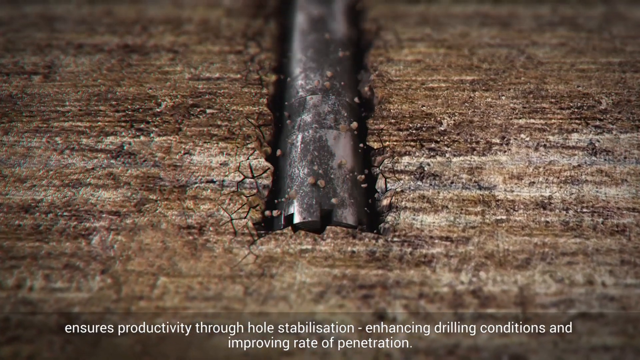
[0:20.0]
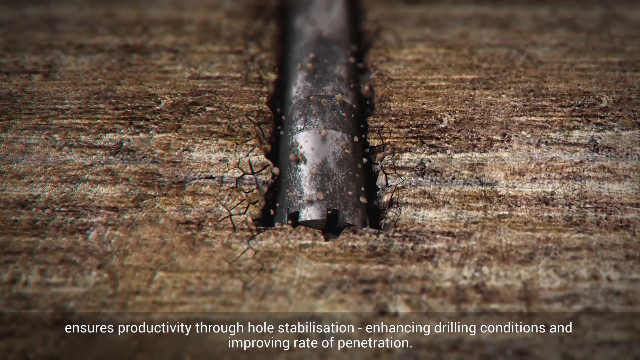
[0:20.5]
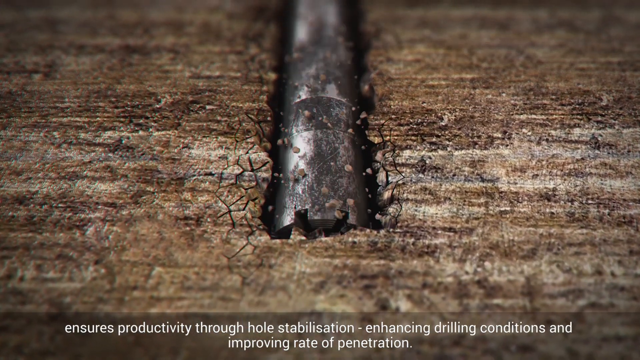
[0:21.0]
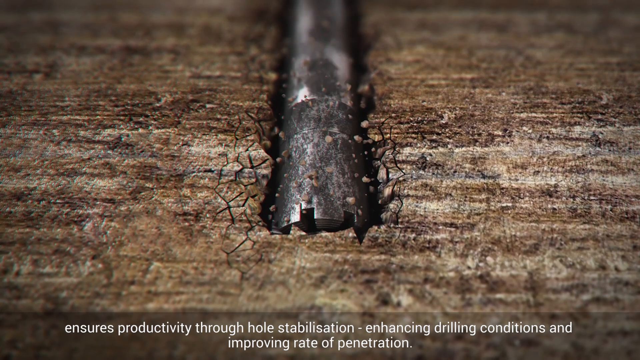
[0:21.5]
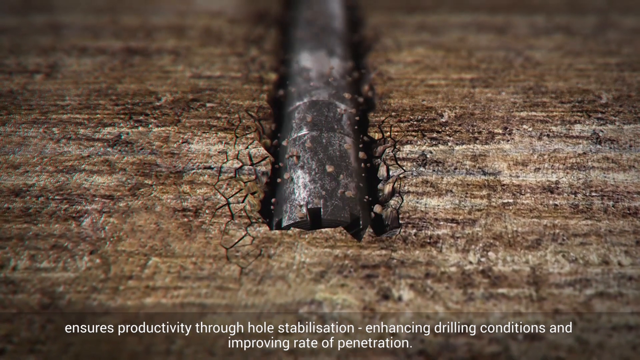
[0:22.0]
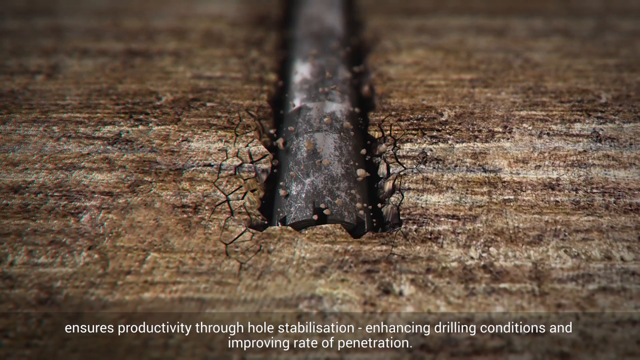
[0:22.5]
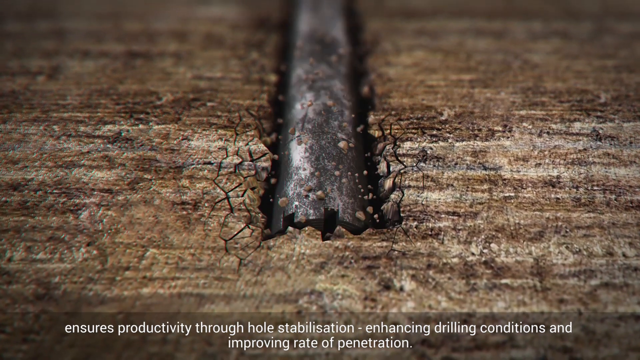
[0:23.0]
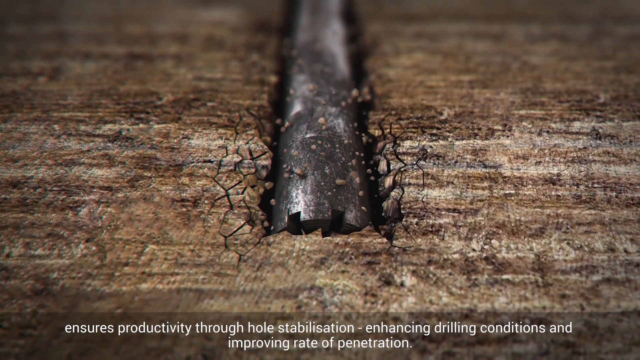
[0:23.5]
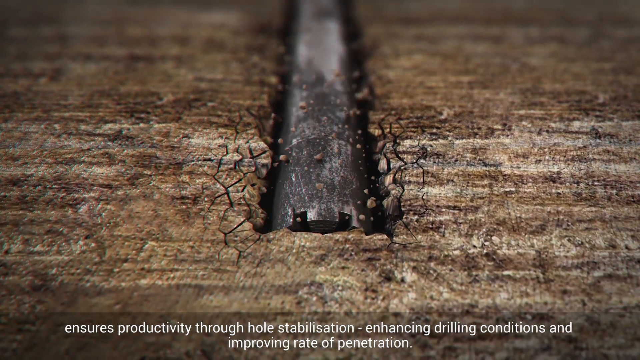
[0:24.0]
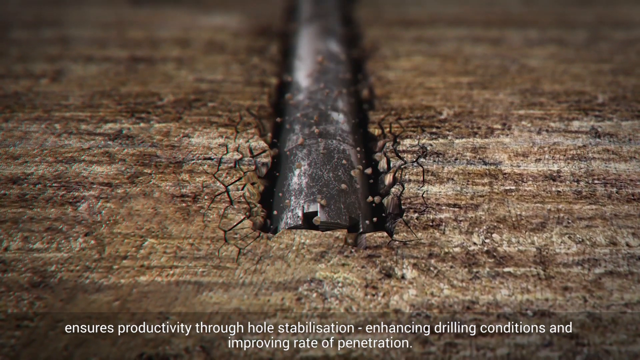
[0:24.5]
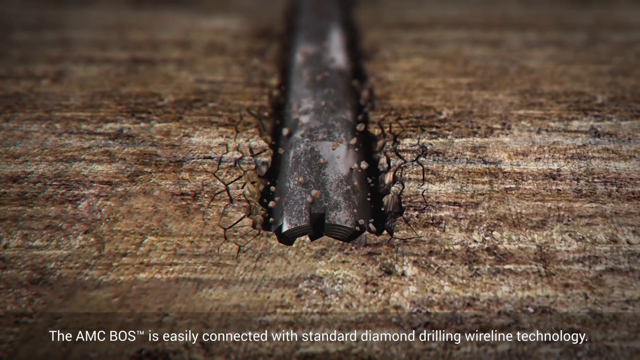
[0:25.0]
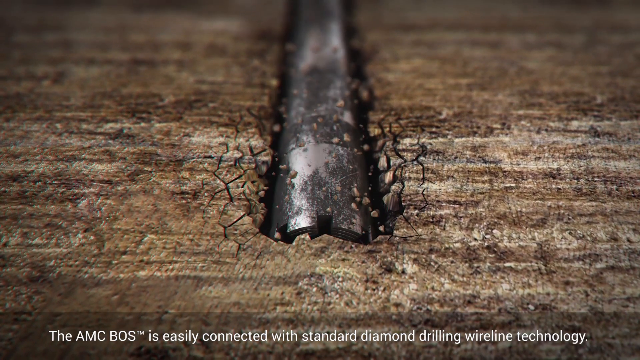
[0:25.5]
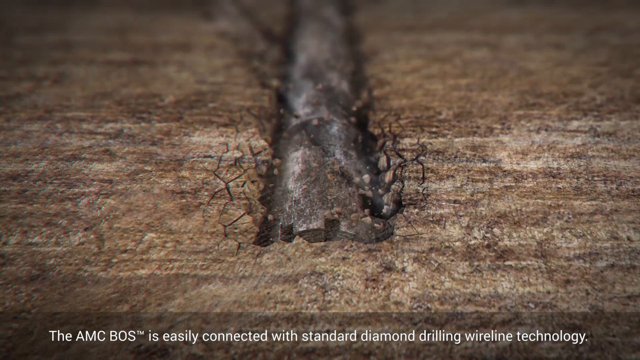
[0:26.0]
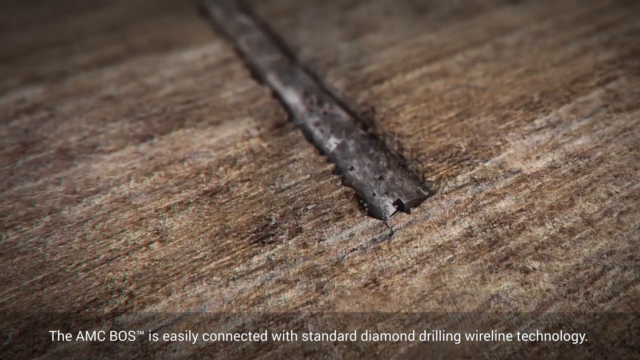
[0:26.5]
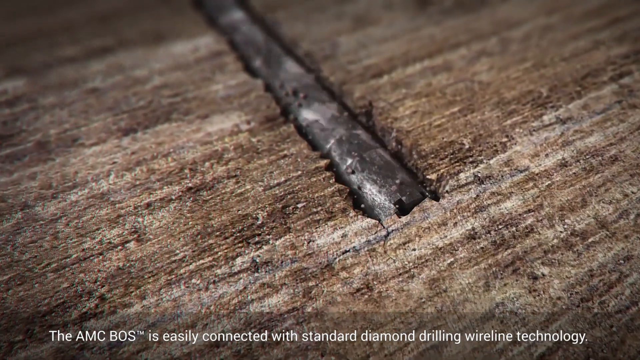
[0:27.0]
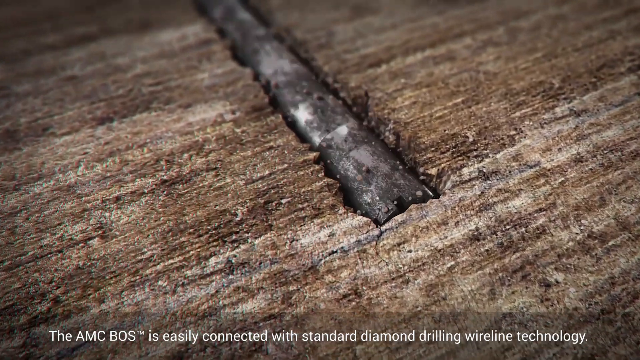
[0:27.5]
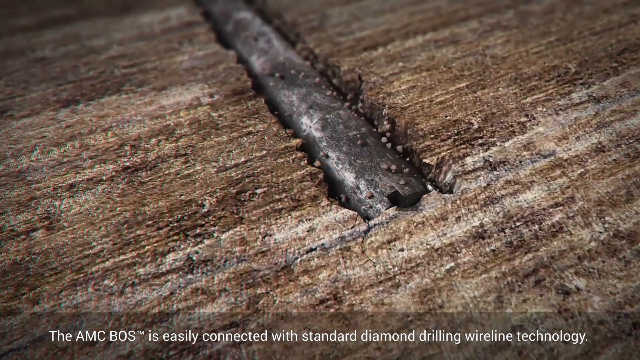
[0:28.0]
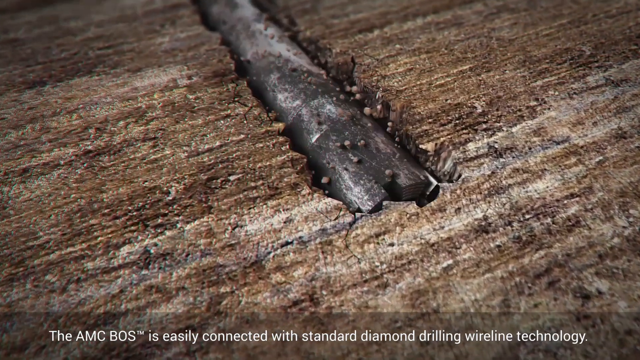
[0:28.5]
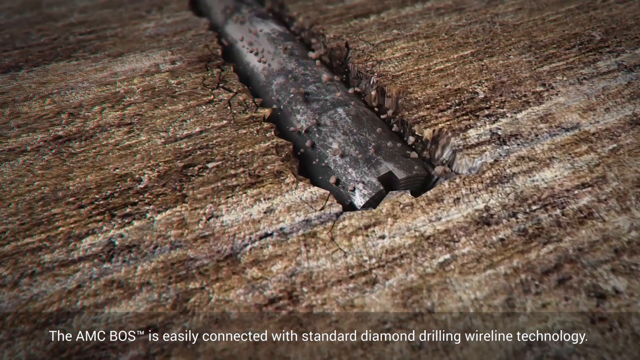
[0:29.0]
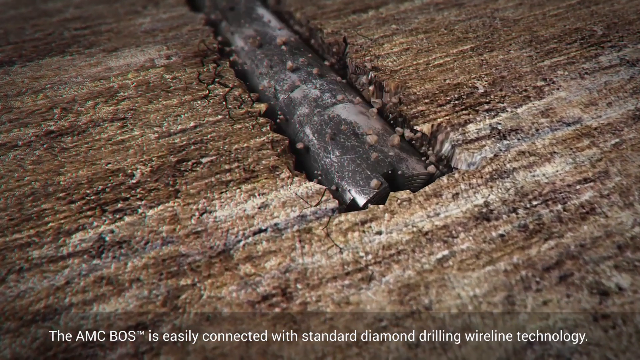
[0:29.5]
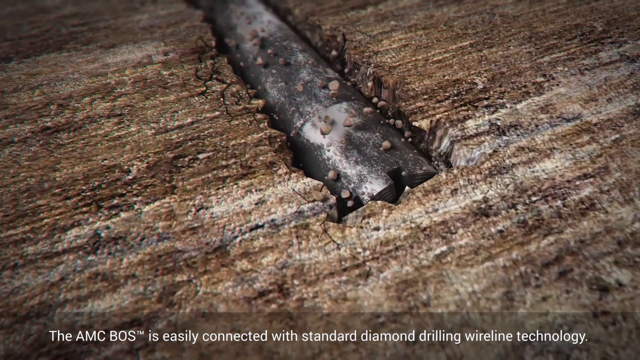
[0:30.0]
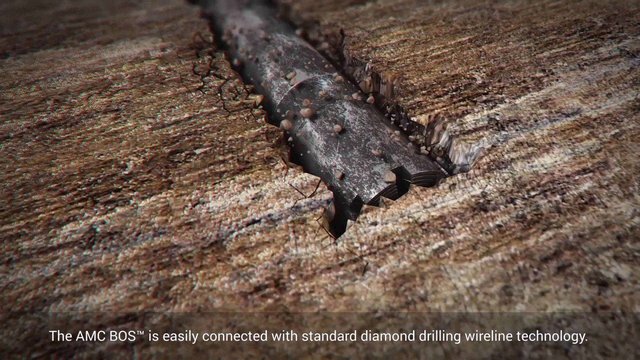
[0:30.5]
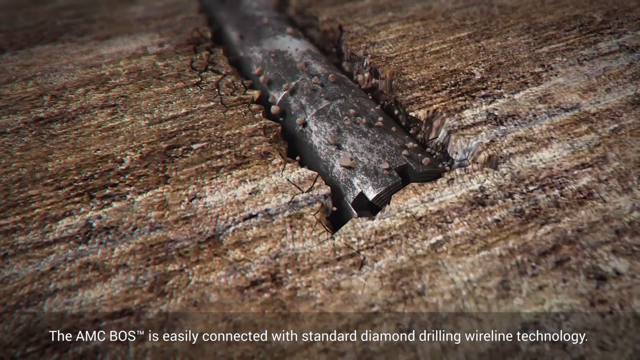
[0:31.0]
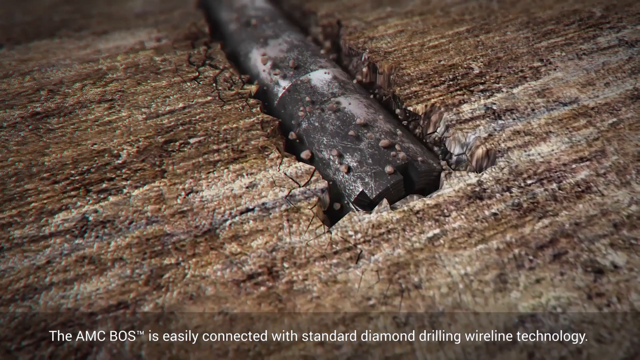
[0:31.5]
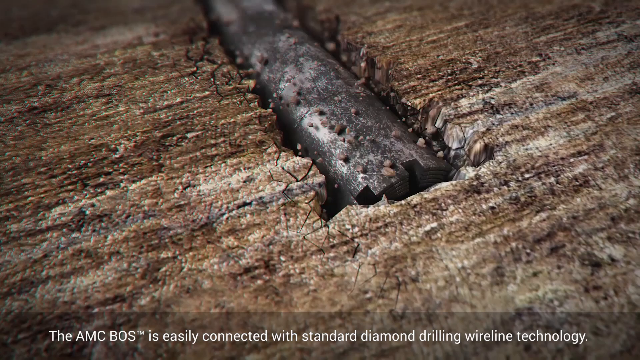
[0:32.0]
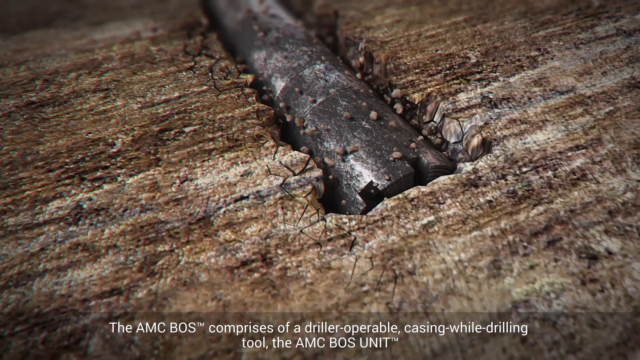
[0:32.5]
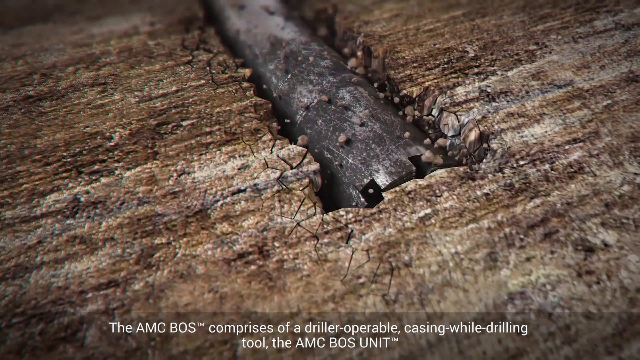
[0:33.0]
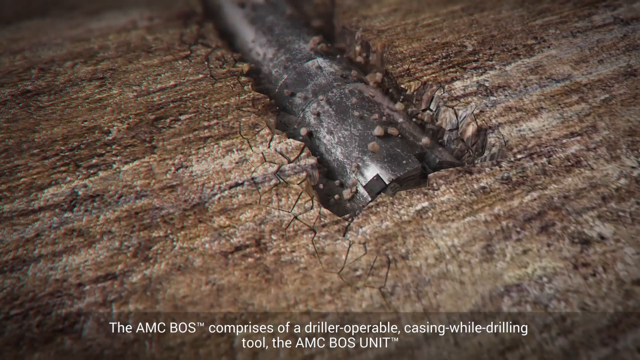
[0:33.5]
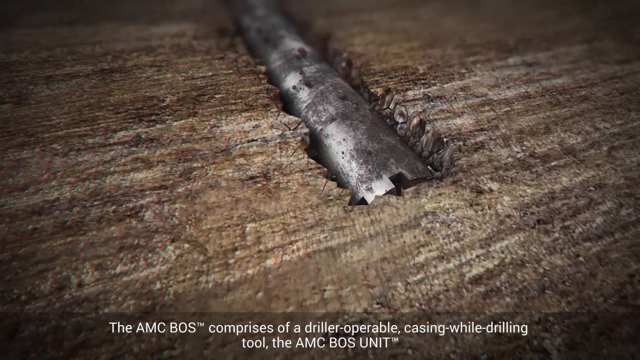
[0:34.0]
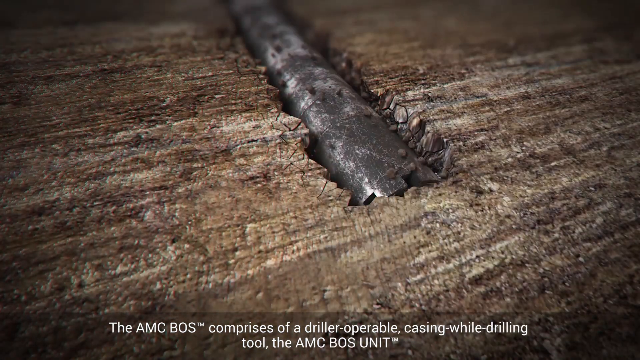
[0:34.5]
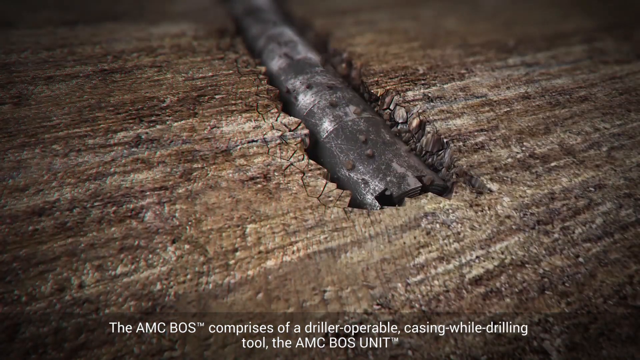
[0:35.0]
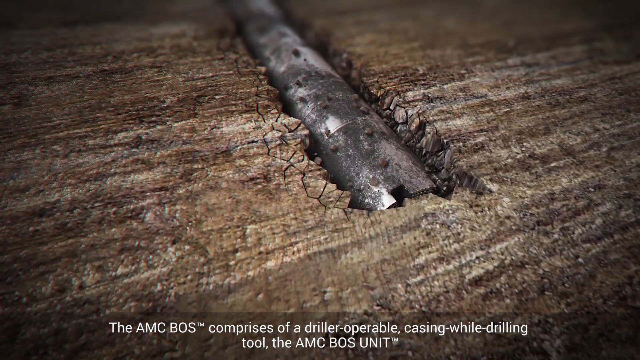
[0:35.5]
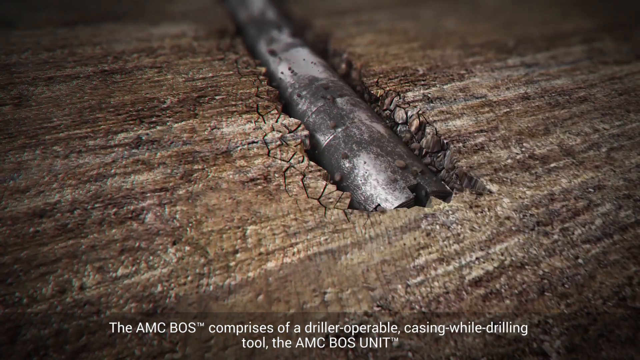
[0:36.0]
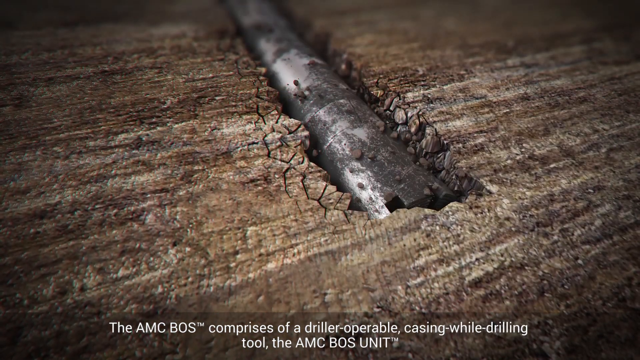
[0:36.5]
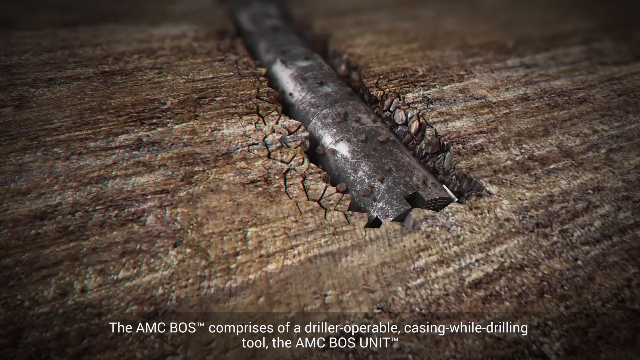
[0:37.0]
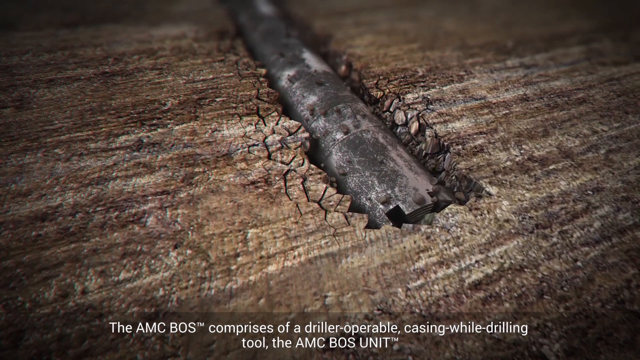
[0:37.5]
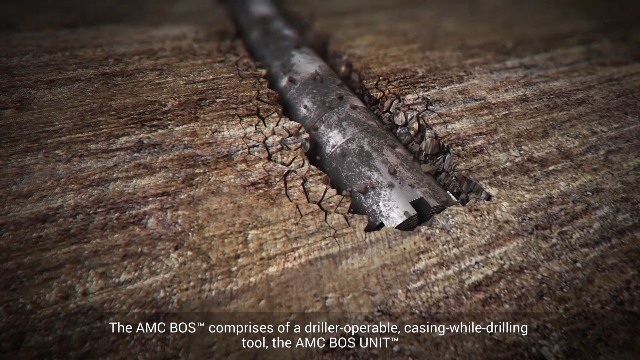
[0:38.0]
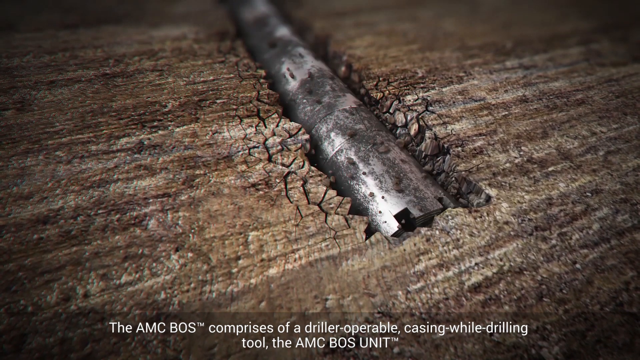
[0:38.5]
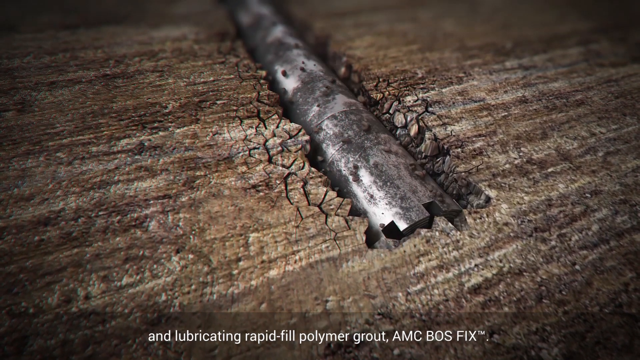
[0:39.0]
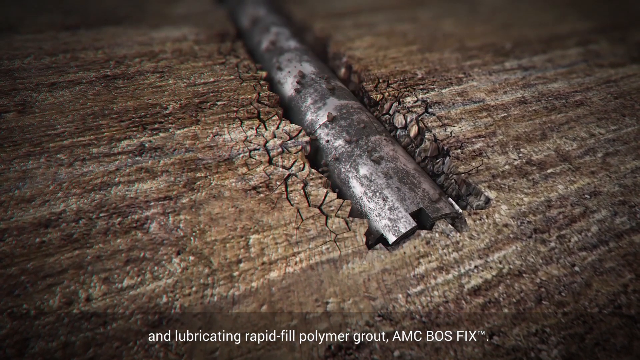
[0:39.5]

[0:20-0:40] The drill bit continues to move through the rock. At the end of the drill bit are little rectangular notches that help it drill. As it does so, the rock chips away and comes out of the drill bit holes, and as the cylinder turns and bores, the material looks like it falls back down into the hole being drilled. The drill bit is steady and continuously moving; at its end there are different levels, with striations through it as it grinds away at the rock. The pieces of rock coming off the drill bit are round, like crumbles of rock. The bit moves through the rock at a steady pace, with no apparent glitches or stopping. On-screen text says the AMC-BOS is "easily connected with standard diamond drilling" and that "The AMC-BOS comprises of a driller operable casing while drilling."